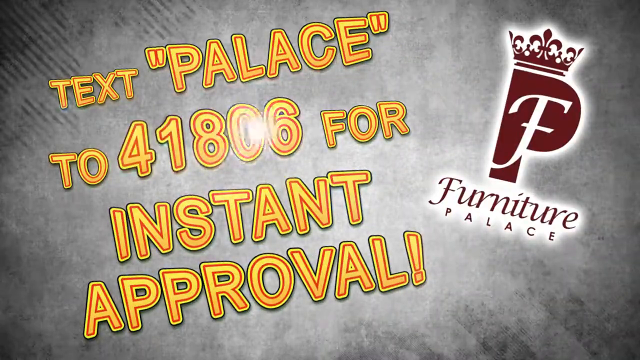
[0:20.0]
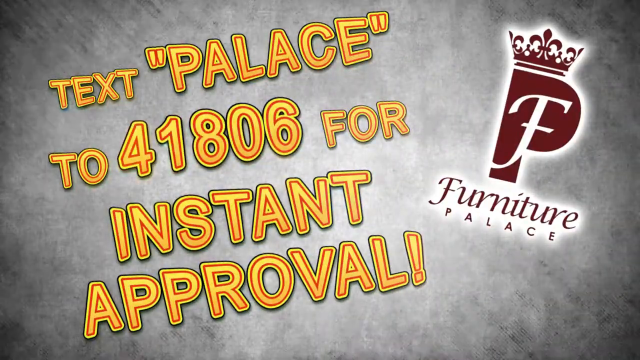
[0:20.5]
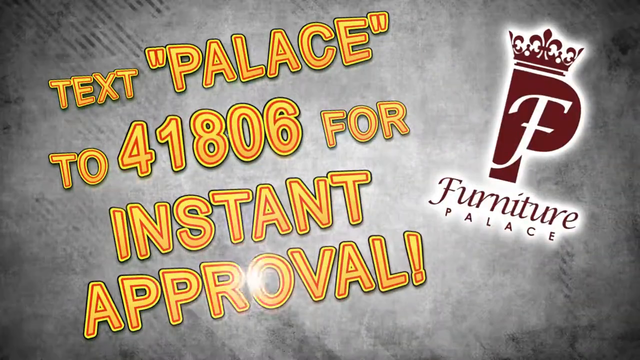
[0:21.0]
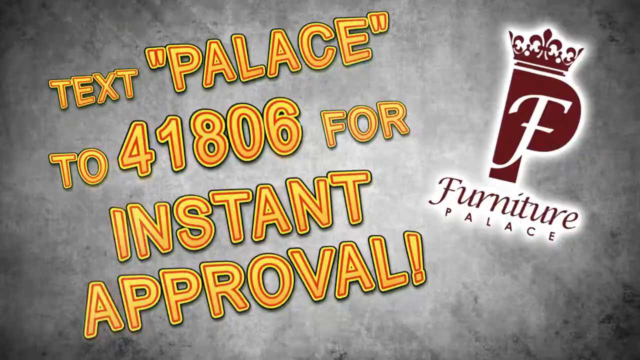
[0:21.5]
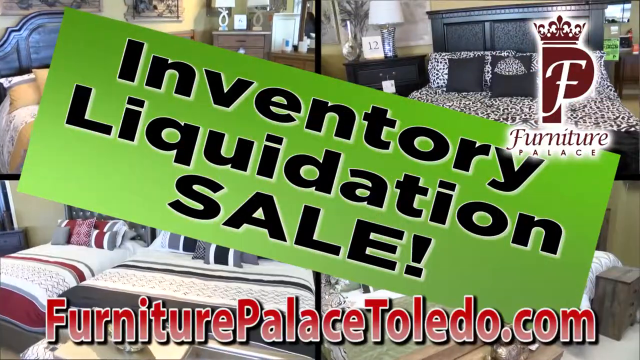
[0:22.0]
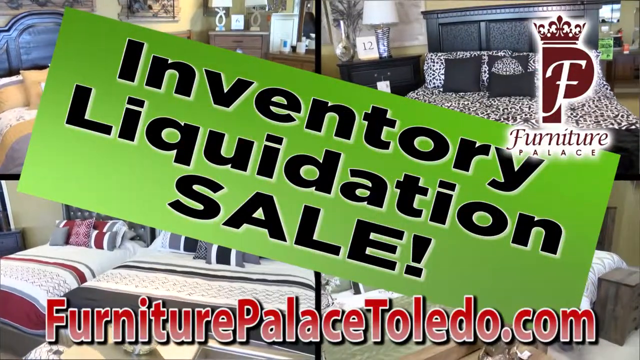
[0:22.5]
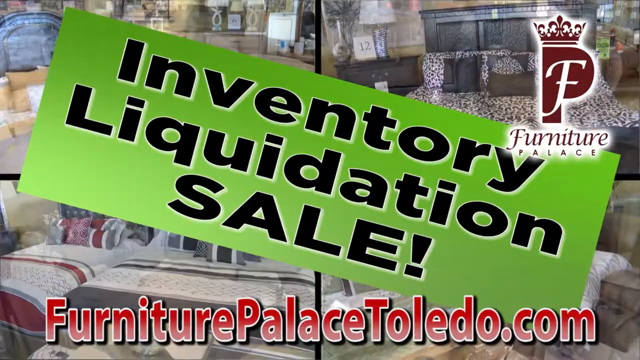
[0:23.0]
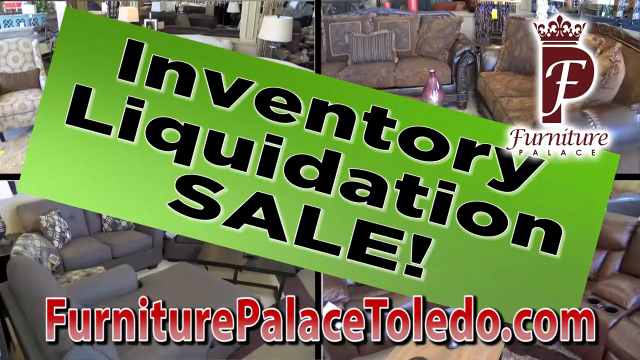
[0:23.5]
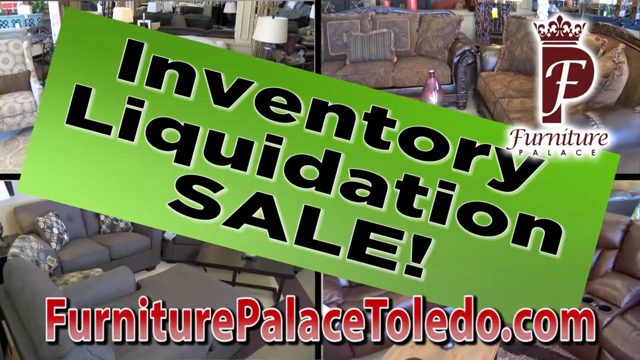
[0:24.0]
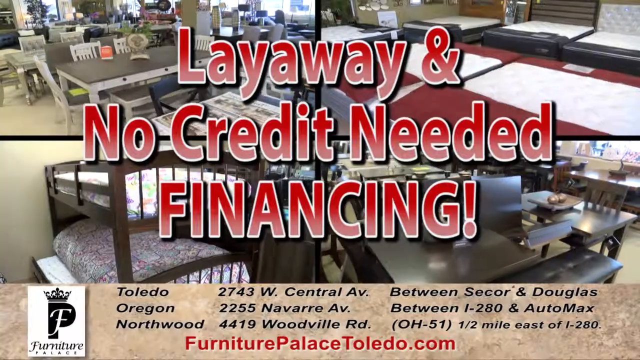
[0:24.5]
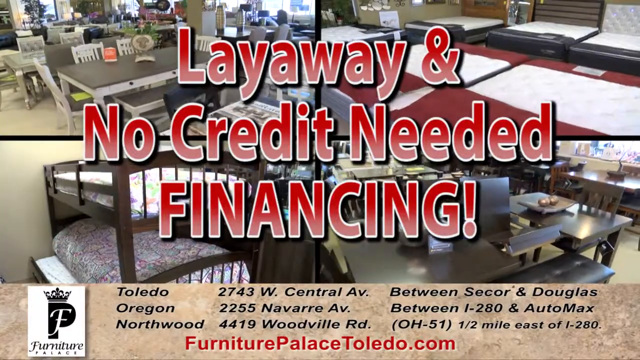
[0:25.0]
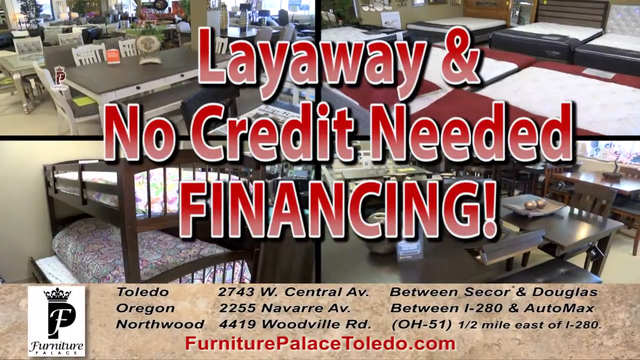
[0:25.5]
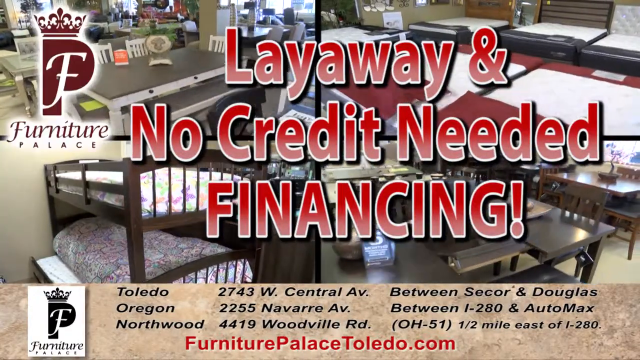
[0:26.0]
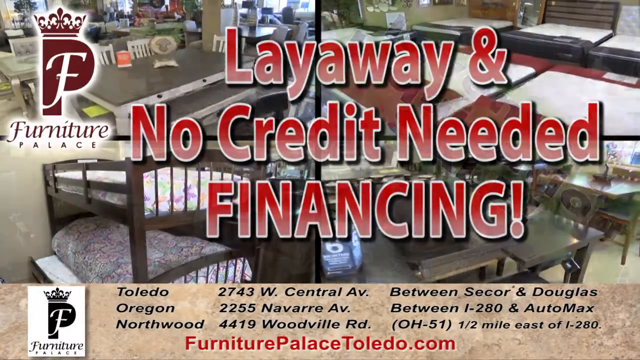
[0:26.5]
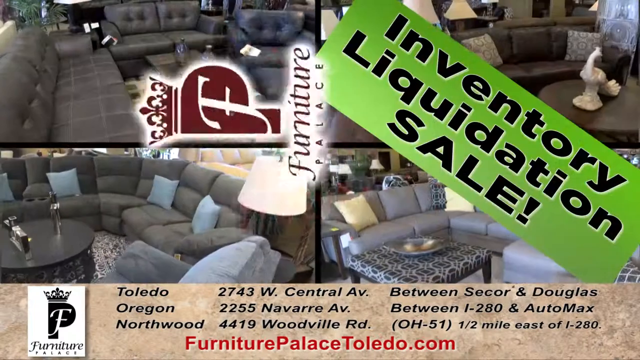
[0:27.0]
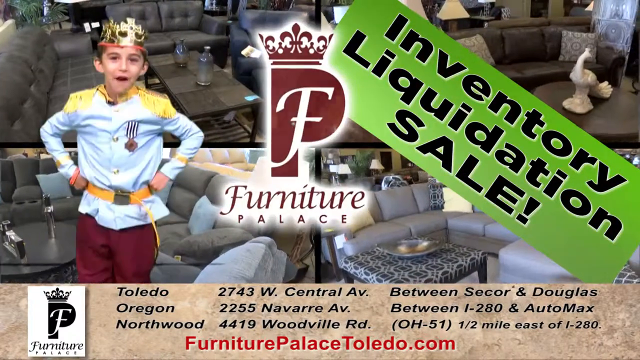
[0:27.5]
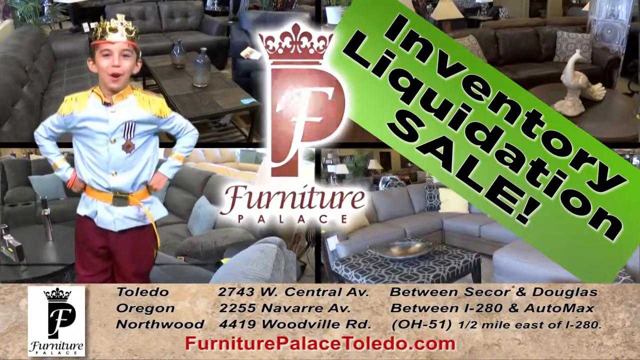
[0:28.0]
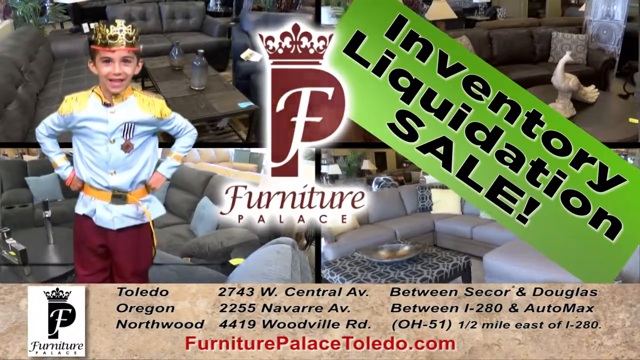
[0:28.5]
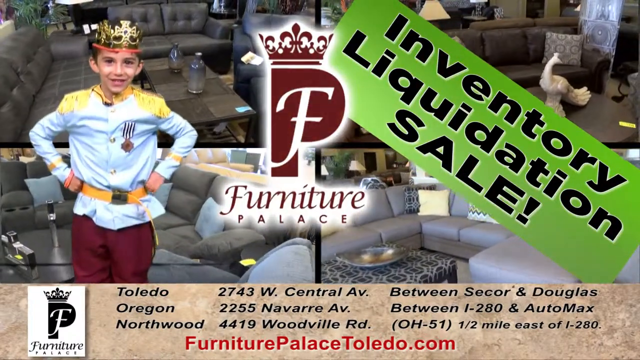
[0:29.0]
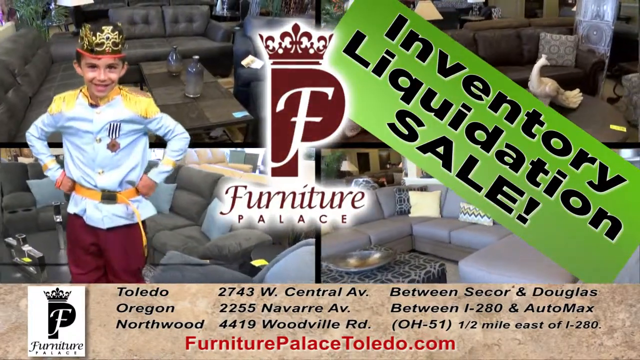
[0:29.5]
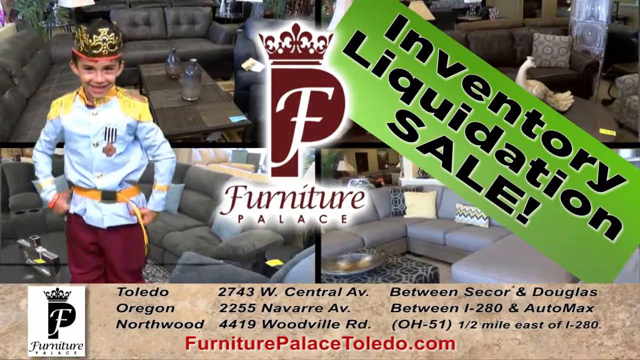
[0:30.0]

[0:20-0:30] The scene opens with the text "Text Palace to 41806 for instant approval" on a grey background with a stonewashed, concrete-type effect. On the right is a deep red Furniture Palace logo: a blocked-out P with a stylised F in white in the middle of the P and a crown on top of the P, with "Furniture Palace" written below it. This is an inventory liquidation sale. The scenes move quickly from one to another, and a young boy aged about 12 or 13, maybe younger, pops up. He wears a crown and a blue top with epaulets on the shoulders, and has a yellow belt on, along with something red burgundy.